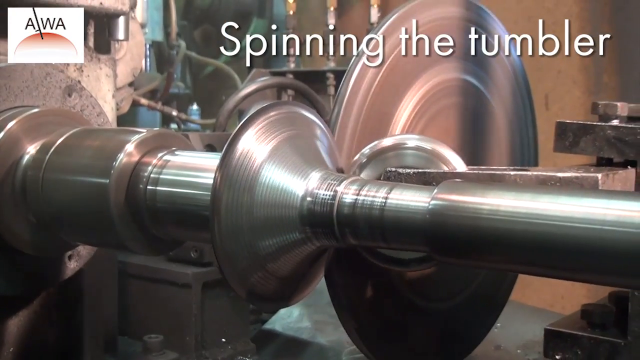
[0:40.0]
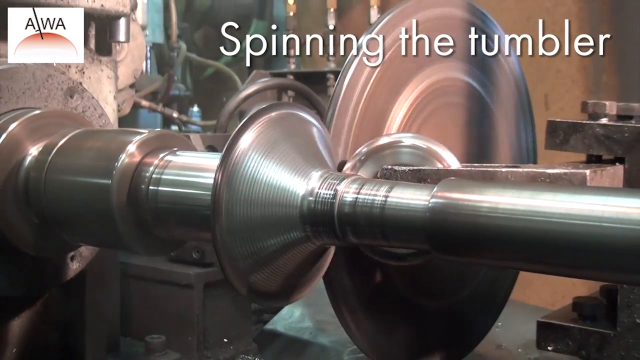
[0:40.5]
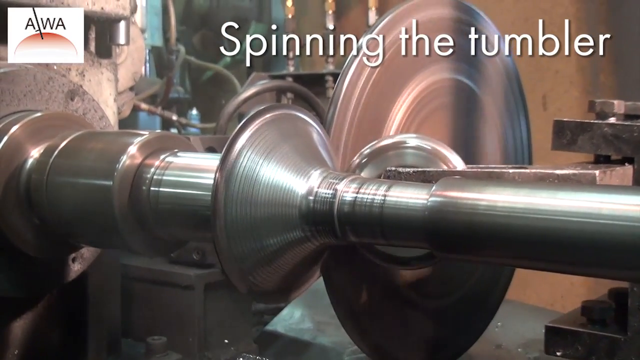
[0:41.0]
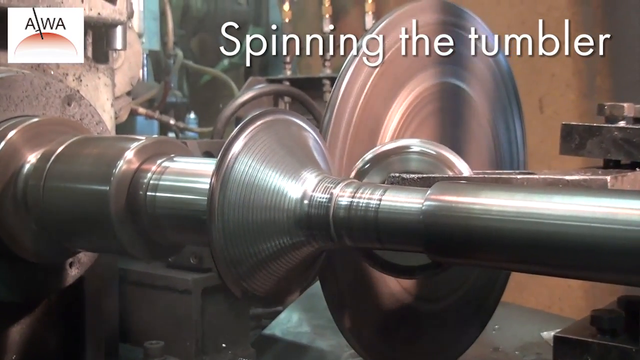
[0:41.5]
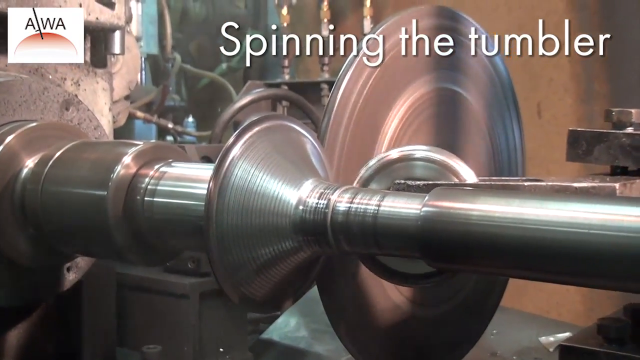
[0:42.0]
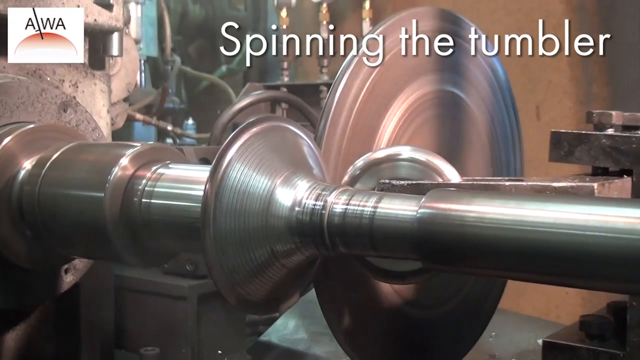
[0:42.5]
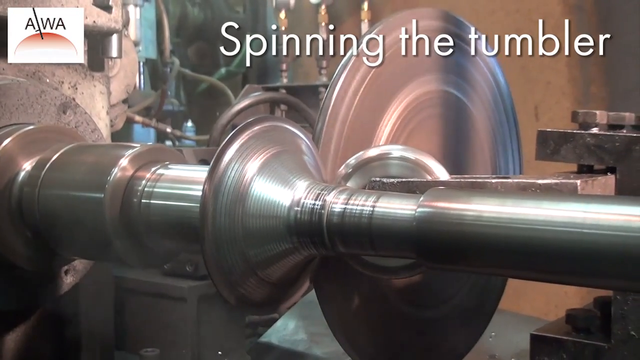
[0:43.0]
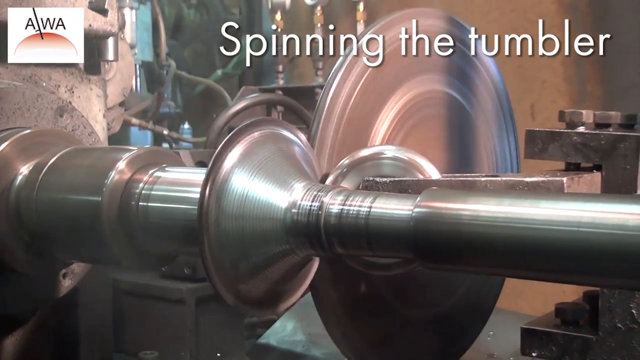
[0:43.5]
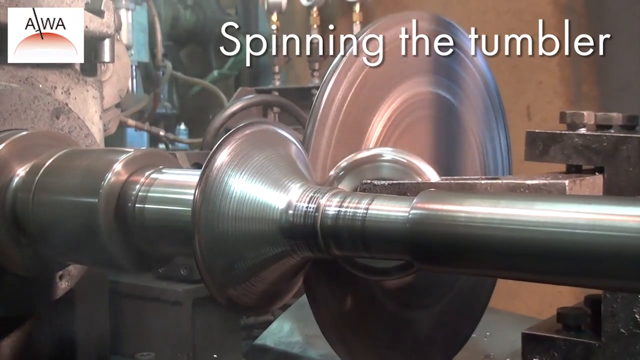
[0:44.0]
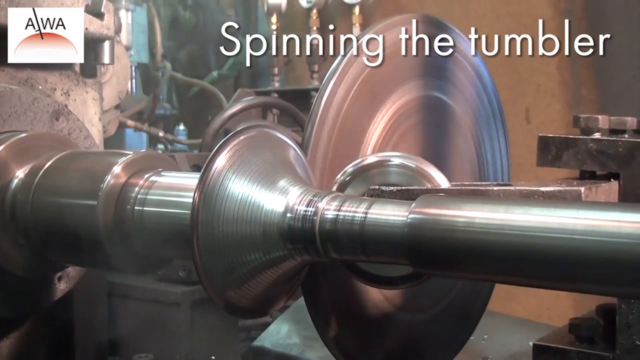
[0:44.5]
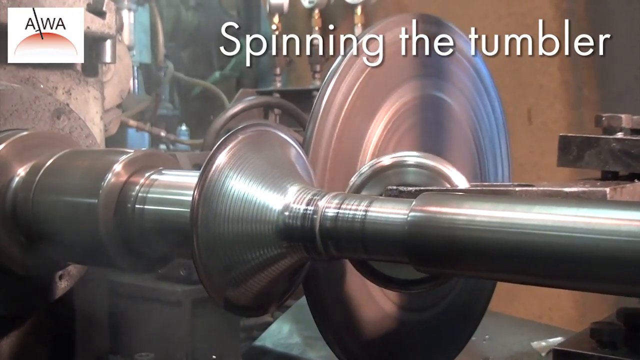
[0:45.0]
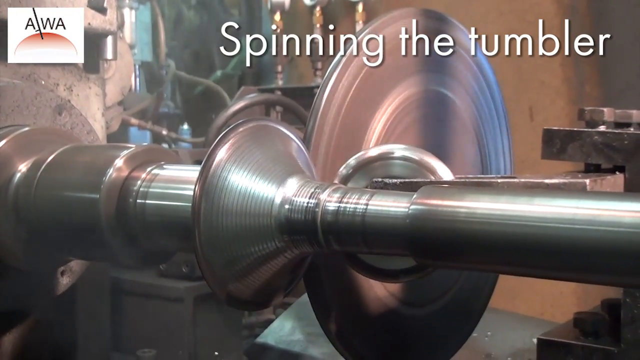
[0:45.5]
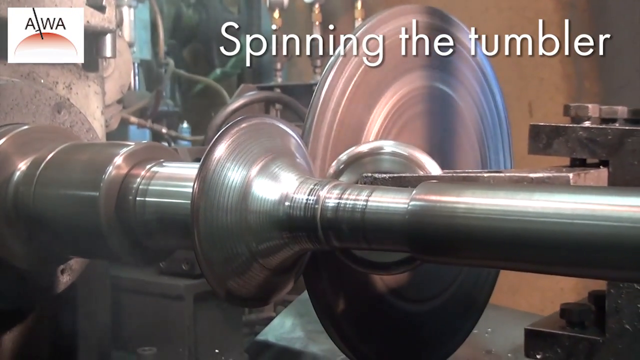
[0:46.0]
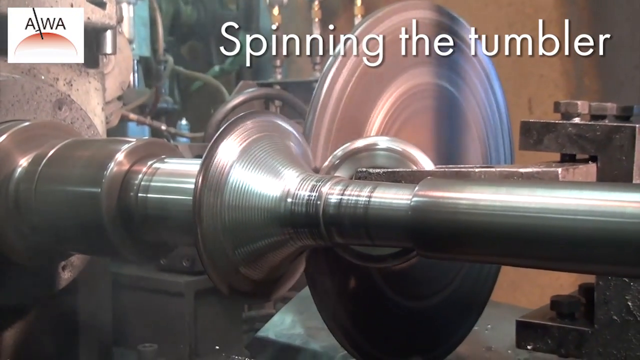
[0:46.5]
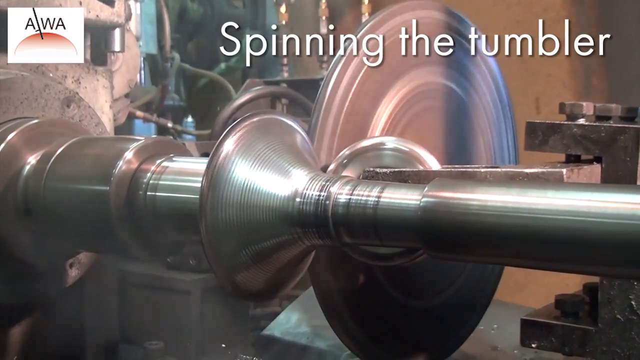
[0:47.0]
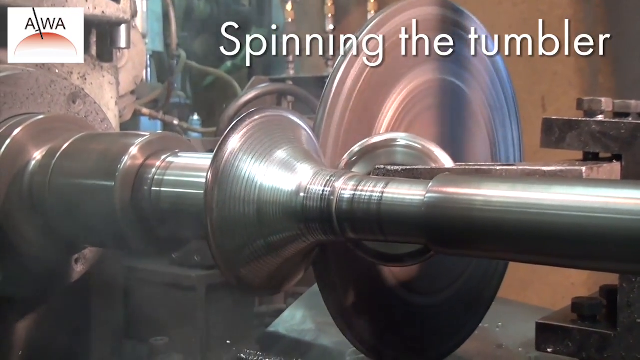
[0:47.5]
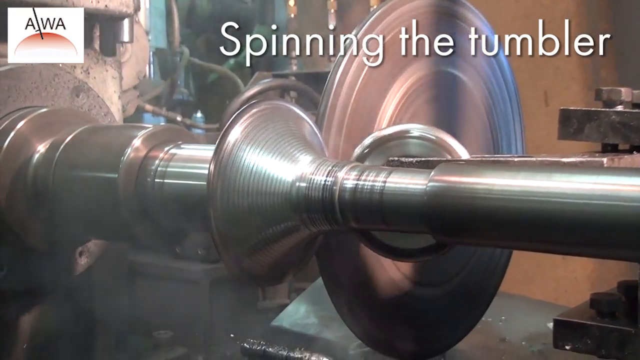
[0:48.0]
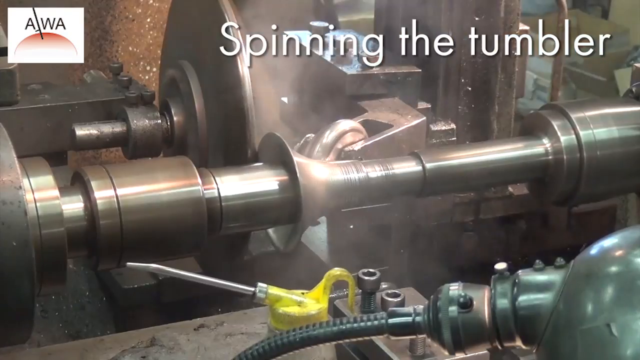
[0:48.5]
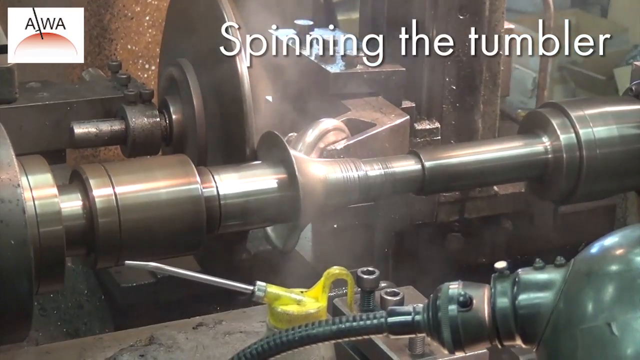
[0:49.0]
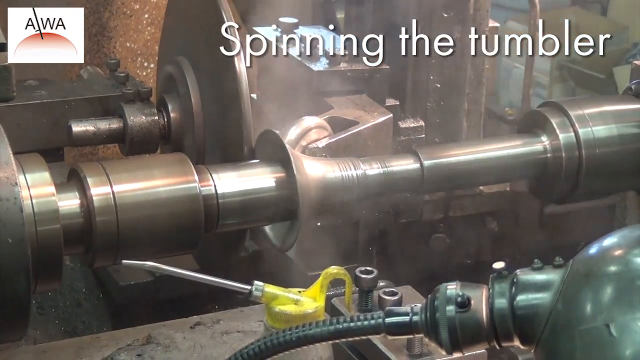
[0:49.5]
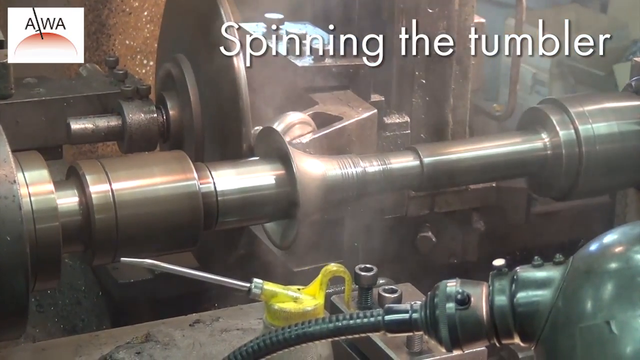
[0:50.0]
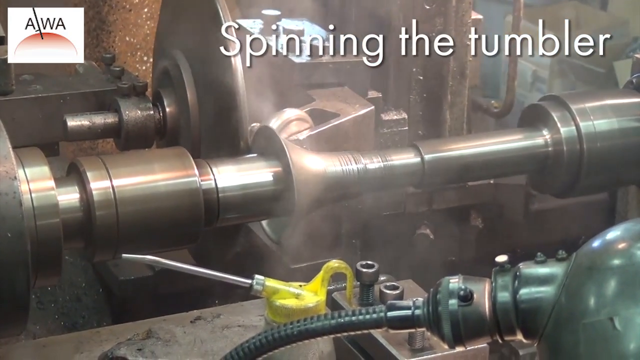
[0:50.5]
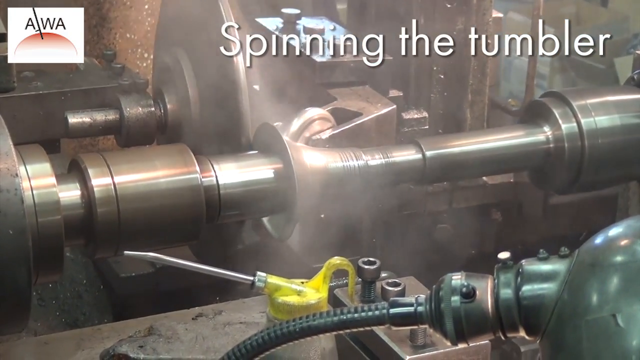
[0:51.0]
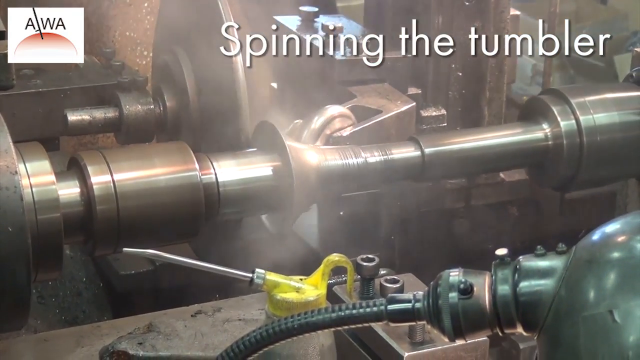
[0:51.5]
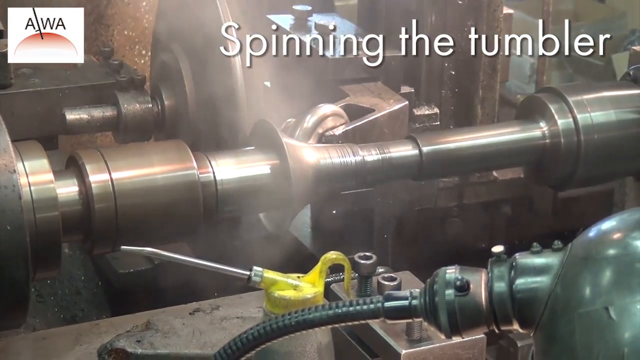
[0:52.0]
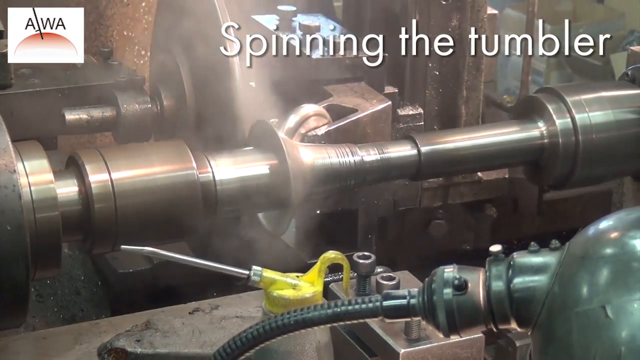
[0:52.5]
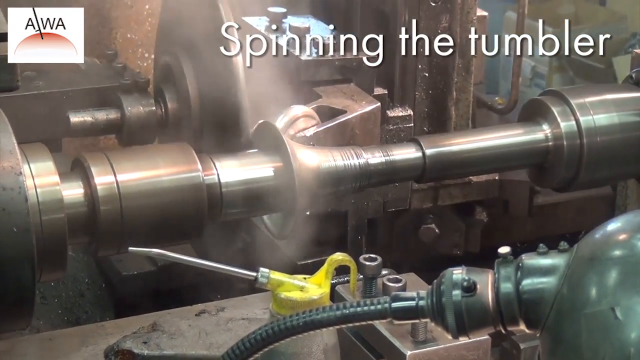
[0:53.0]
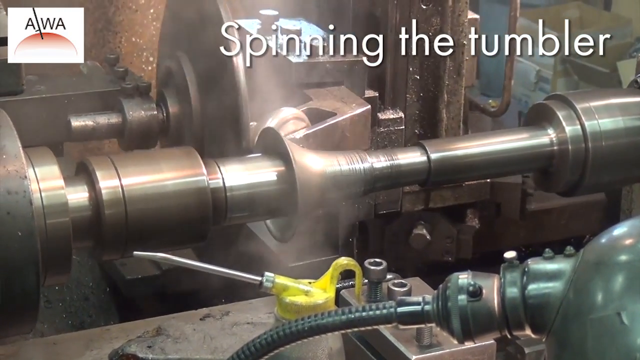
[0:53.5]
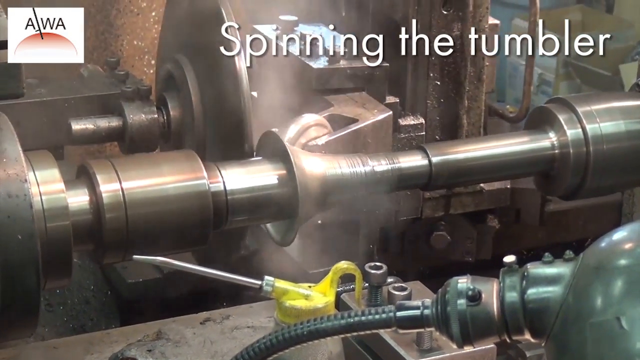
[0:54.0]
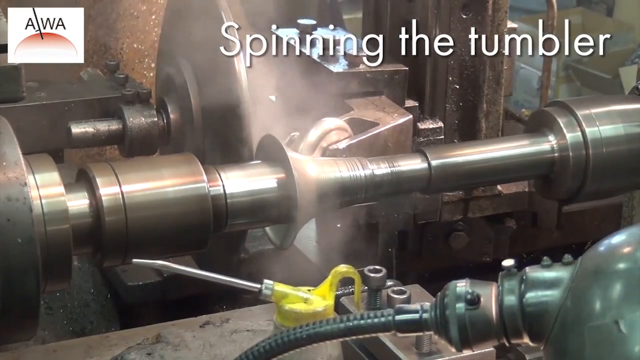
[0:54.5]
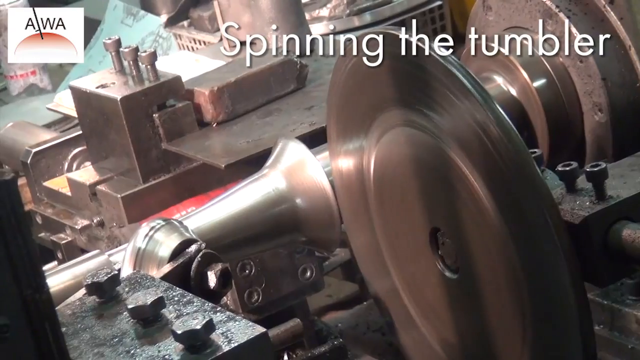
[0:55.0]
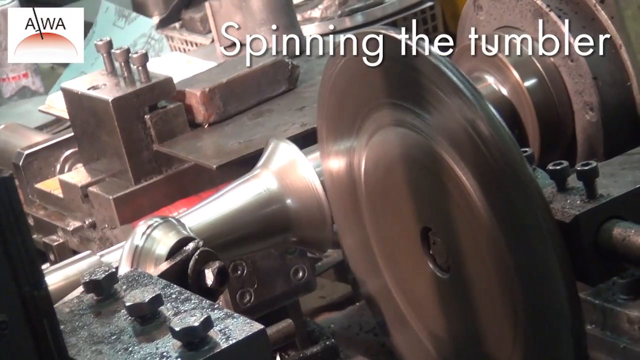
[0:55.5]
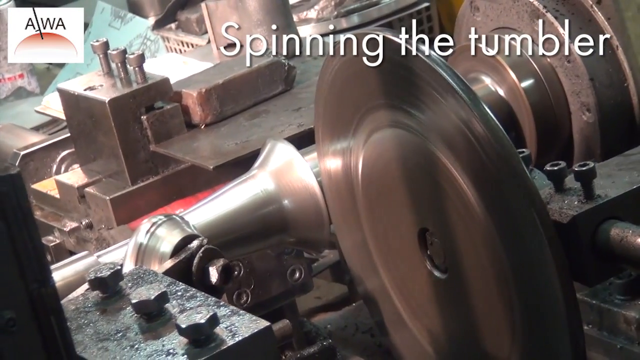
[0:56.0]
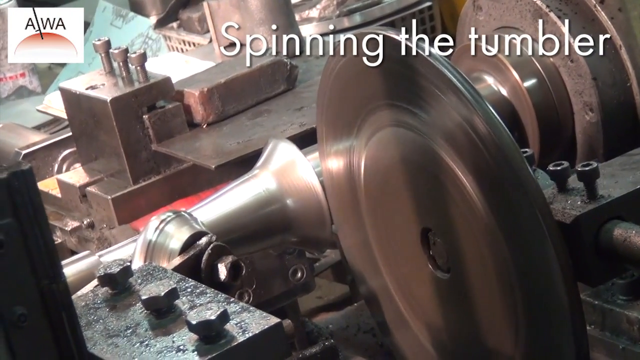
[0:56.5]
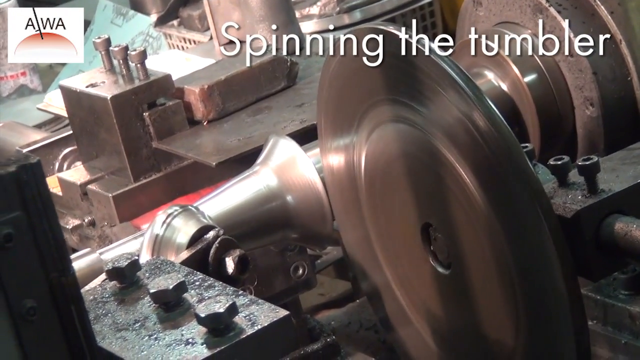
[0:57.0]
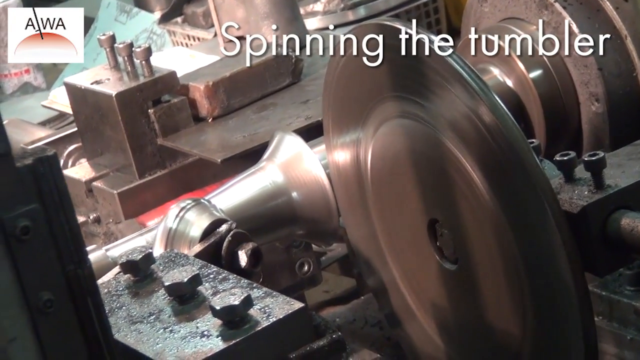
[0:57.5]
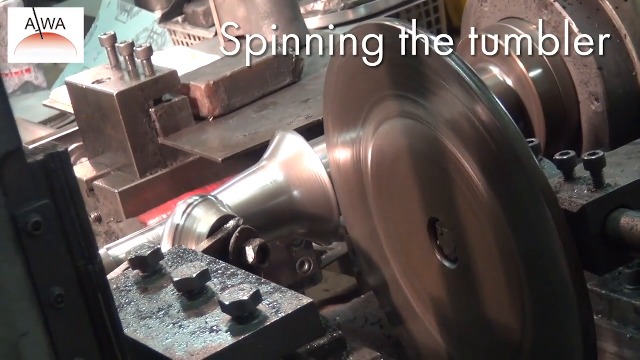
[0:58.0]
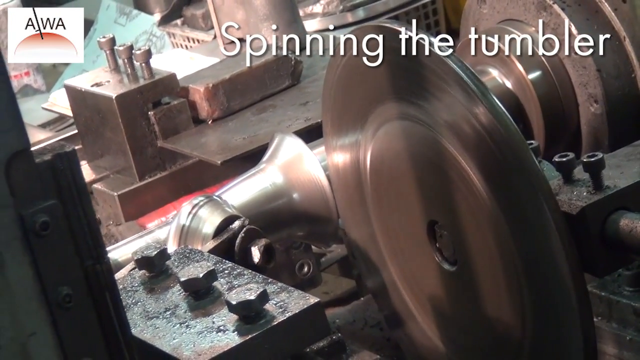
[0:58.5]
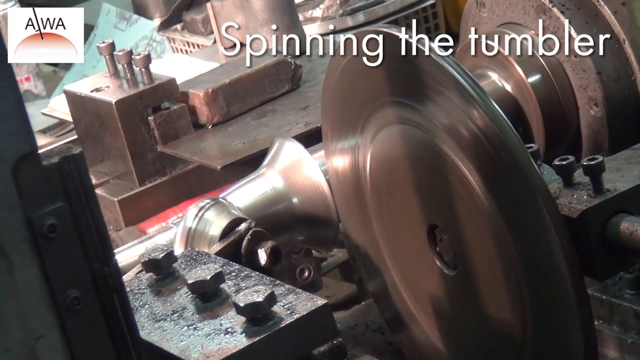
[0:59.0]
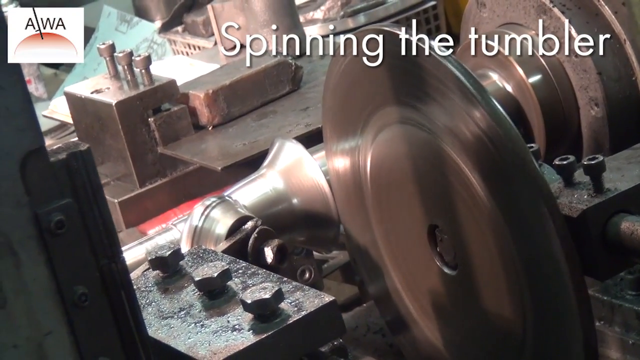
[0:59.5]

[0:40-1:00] Machinery adjusts a dome-shaped metal disk, and the metal ripples across the surface as the machinery adjusts its size. A machine seems to adjust the rim, and the disk is becoming stretched out, almost like a tumbler or a vase. A rotating wheel on the right adjusts the rim while a smaller wheel pushes against it, and the metal ripples as the device touches it. Steam pours from the machine, gushing in front of it. Another shot from the back shows the wheel turning rapidly and touching the rim of the disk. The text "spinning the tumbler" appears in white in the top right corner of the screen. In the top left corner is a white rectangle with a red semicircle with a black stem and the letters "AWA" in black, all caps. A small device, a nozzle attached to a yellow cap, is sitting on the workspace. The machinery is very silvery and shiny, with light reflecting off it, though some of it looks dull, rusty or old, as if it has been used for a while. No people are visible, only the machinery moving. Part of the domed lamp is visible, in a dark mint green color.